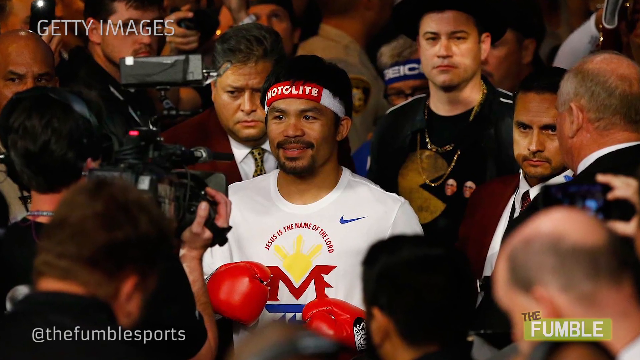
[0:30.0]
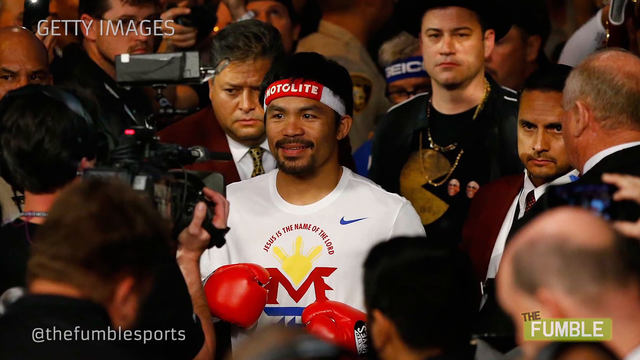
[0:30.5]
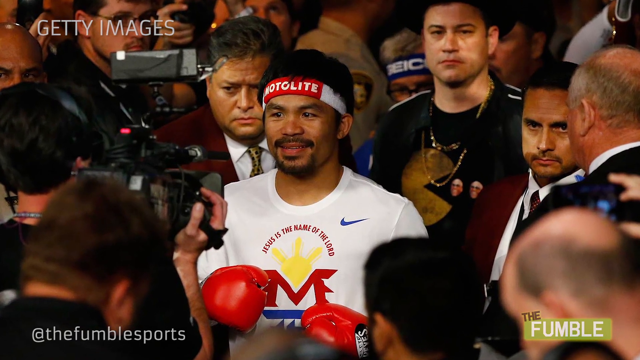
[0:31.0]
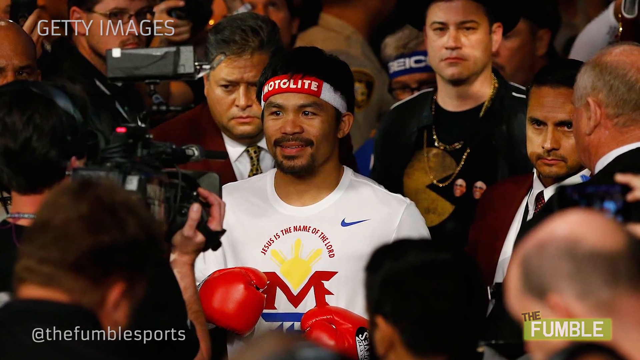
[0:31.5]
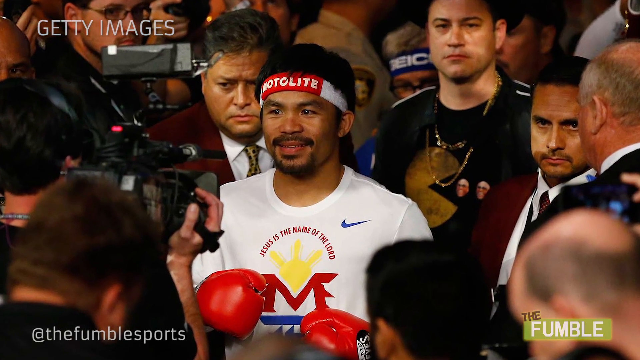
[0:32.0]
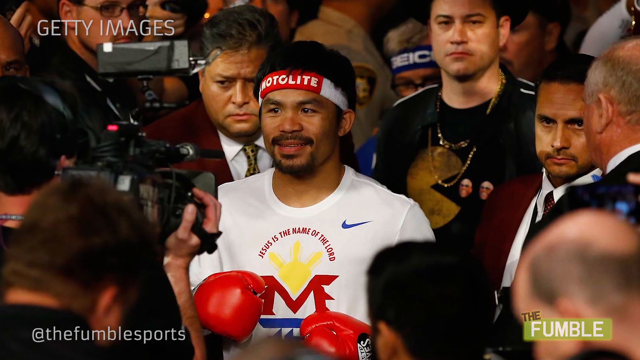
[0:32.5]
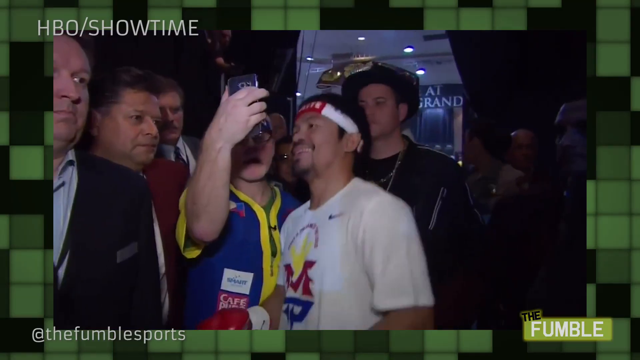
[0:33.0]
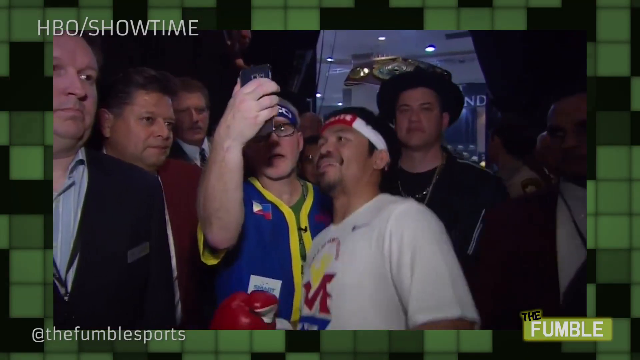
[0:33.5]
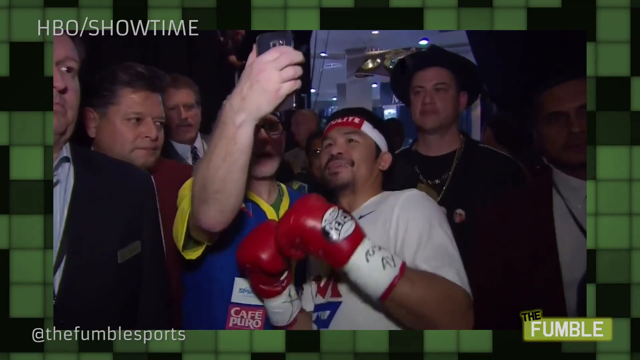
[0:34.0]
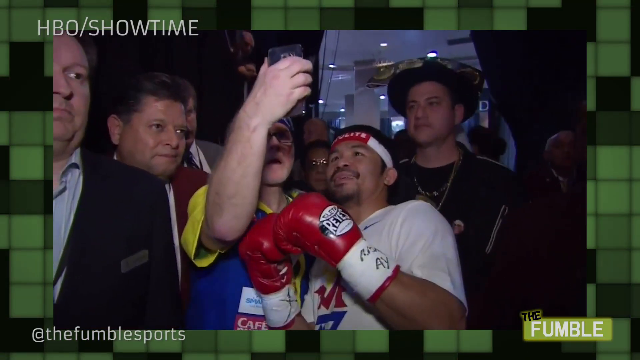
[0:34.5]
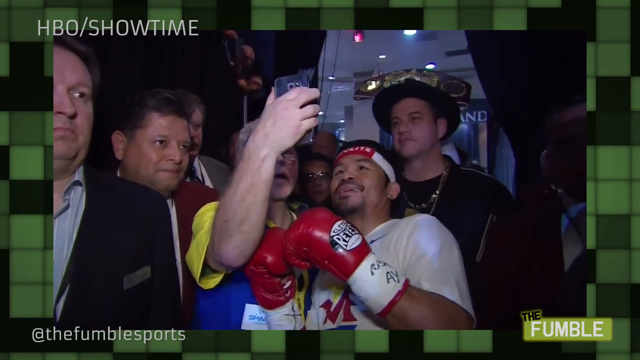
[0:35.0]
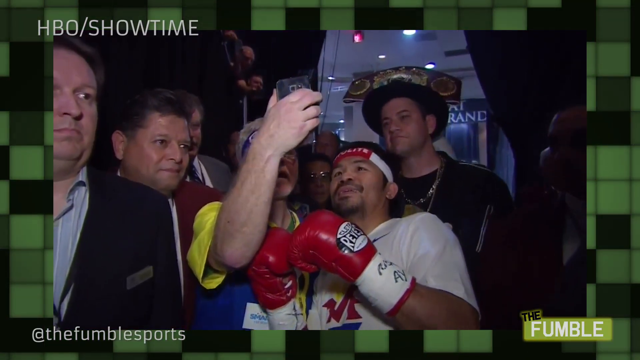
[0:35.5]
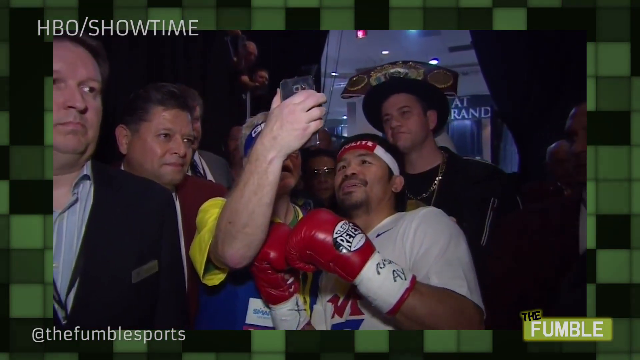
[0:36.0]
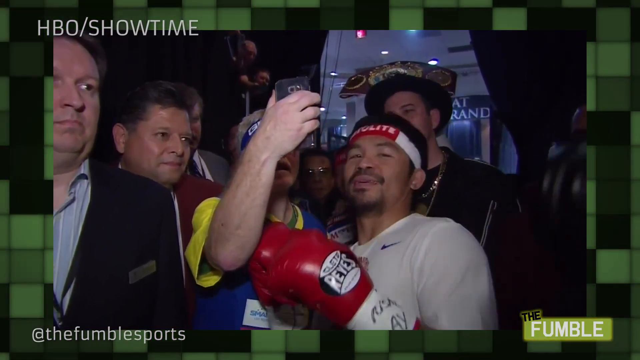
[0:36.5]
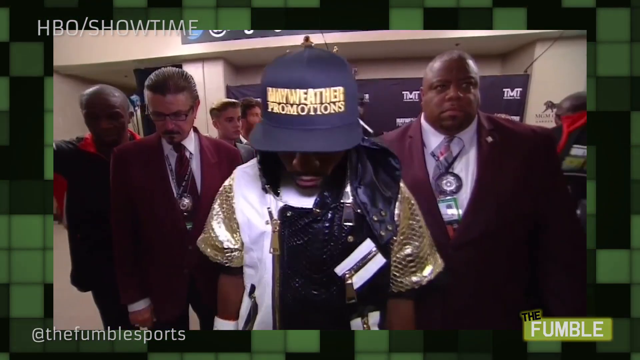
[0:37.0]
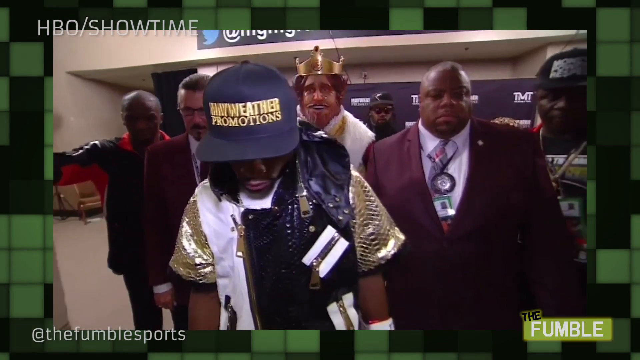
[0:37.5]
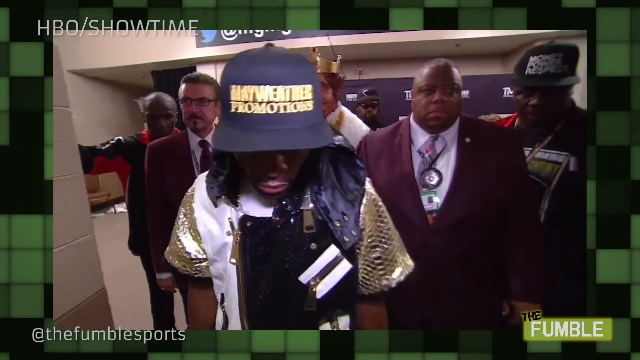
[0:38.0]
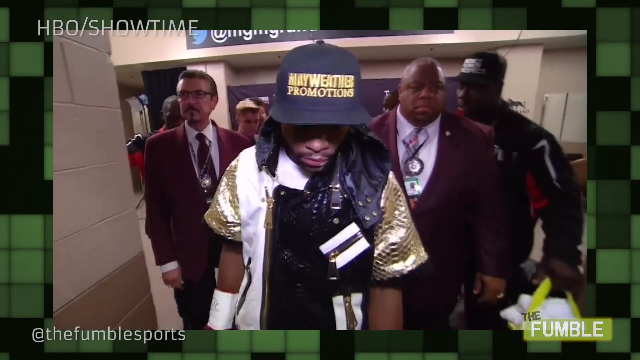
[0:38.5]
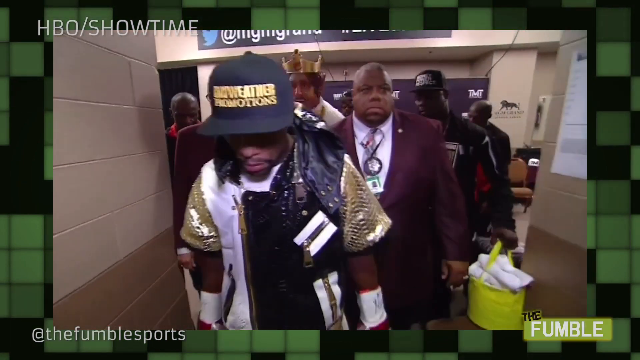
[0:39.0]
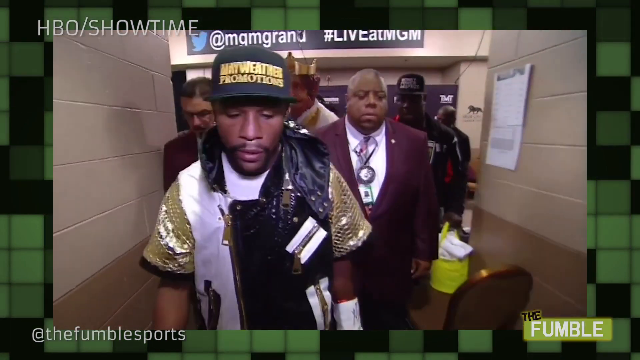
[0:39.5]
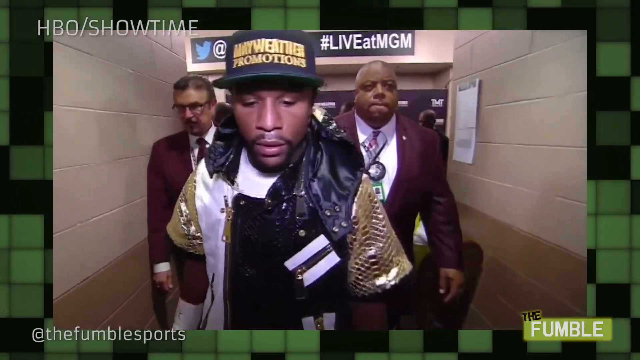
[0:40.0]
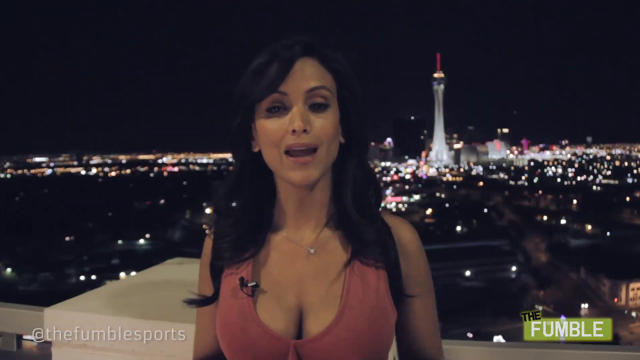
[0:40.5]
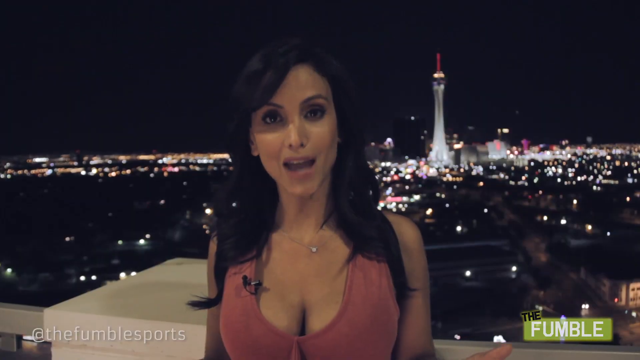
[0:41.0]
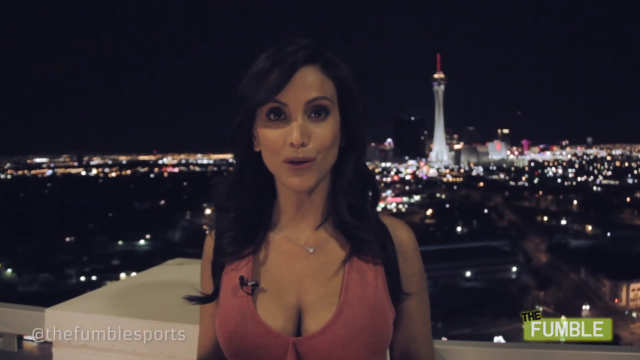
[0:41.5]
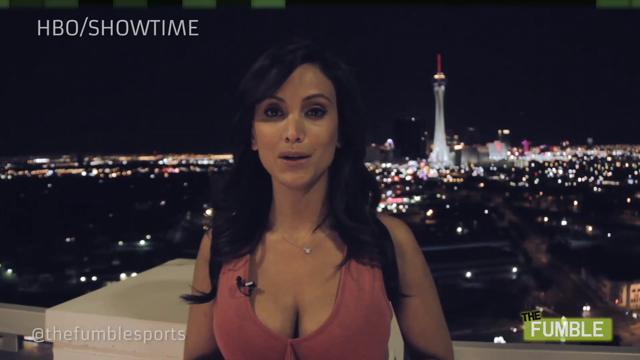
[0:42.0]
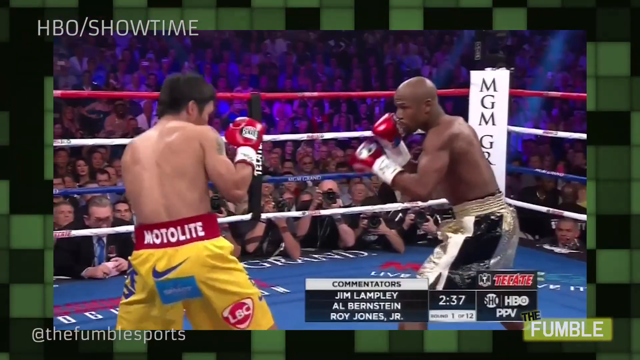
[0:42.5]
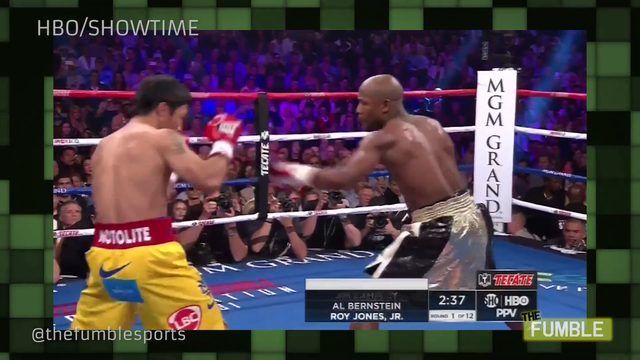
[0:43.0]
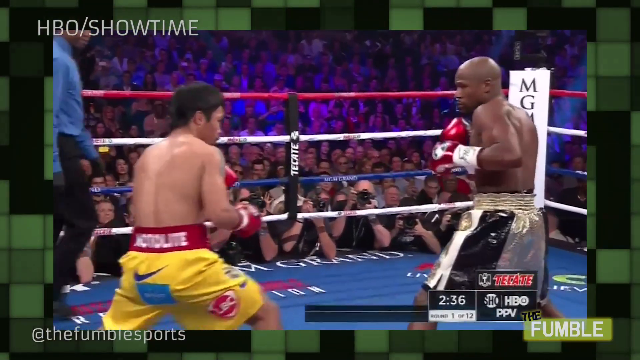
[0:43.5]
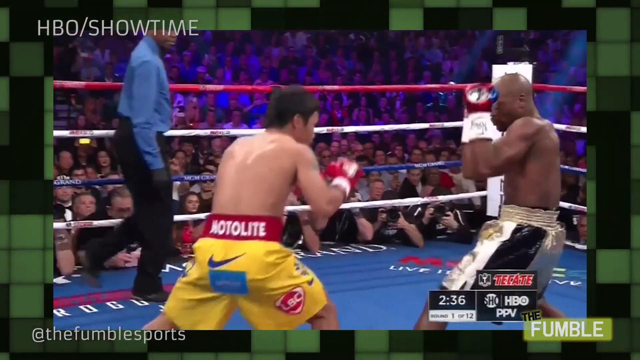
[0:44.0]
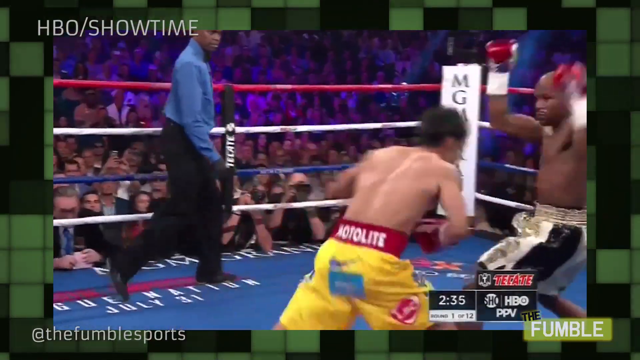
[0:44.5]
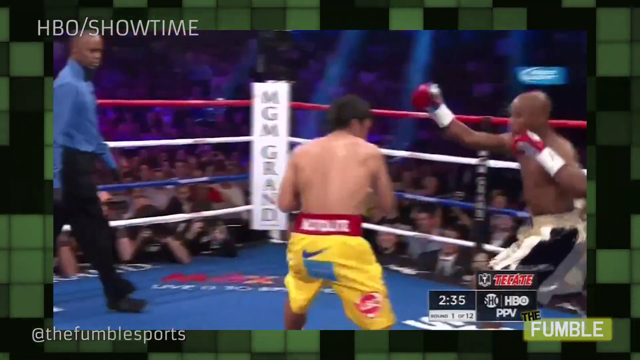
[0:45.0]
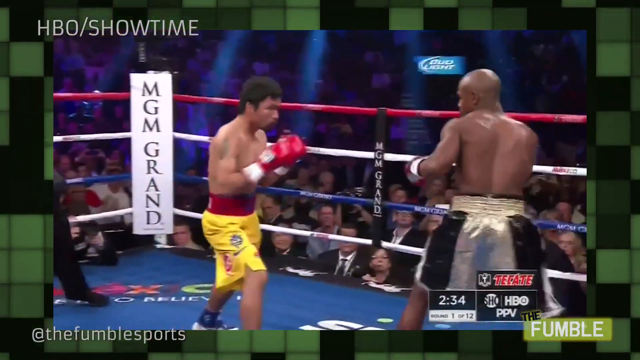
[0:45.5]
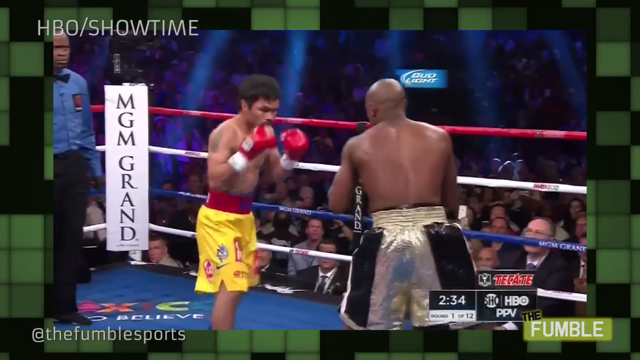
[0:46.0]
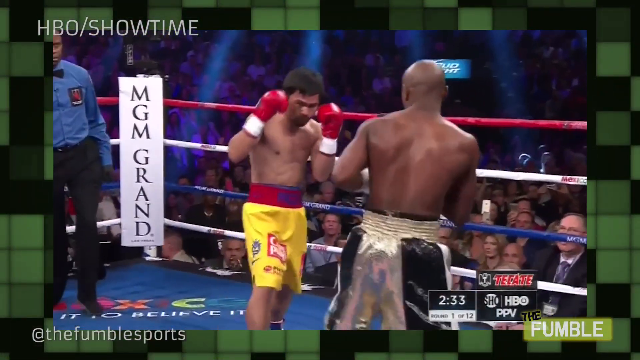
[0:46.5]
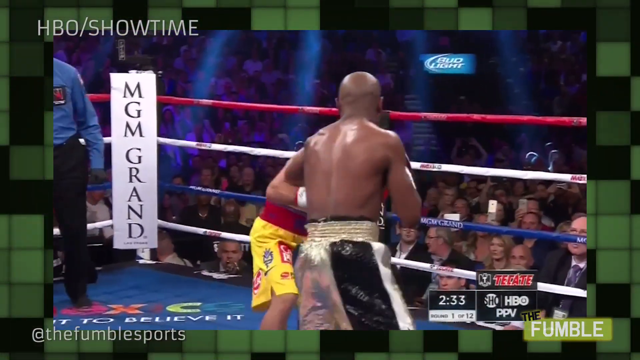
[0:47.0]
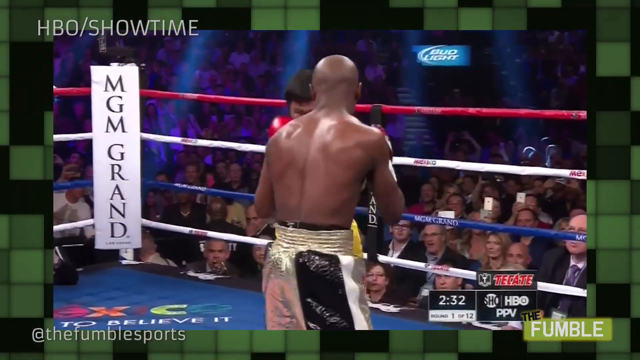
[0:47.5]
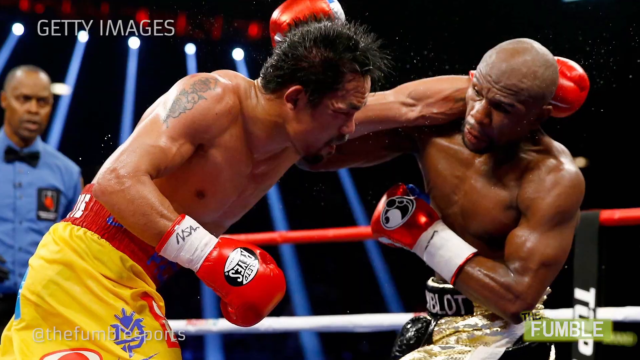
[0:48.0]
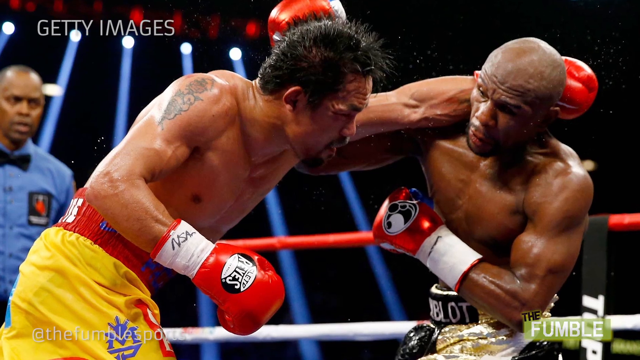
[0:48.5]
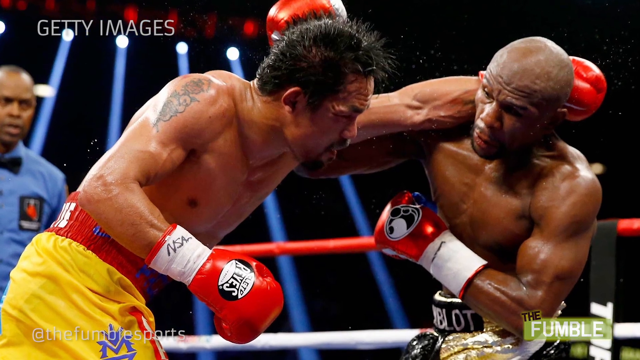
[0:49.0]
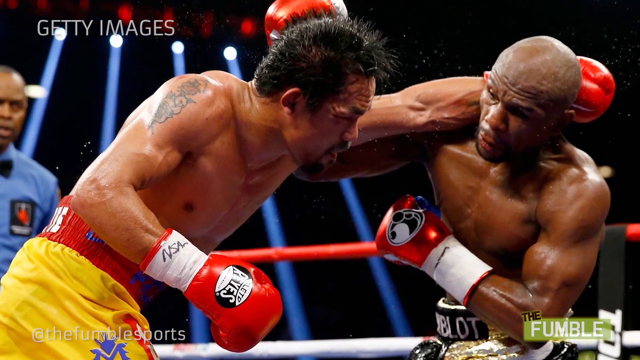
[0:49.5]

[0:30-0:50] A still photograph shows the famous boxer Pacquiao surrounded by people, with a cameraman in front of him; he wears a white Nike t-shirt and red boxing gloves. The video changes to live moving footage of Pacquiao with a fan or somebody, taking a selfie; he jumps up and down in front of the smartphone held up above him. The next scene shows another famous boxer, Mayweather, wearing a black cap with gold writing that says "Mayweather Promotions". His outfit is gold, black and white and very glamorous. A crew of people is behind him, one of them wearing a costume that looks like the Burger King King. The video then cuts to a news presenter, a woman with long dark hair and tanned skin, talking toward the camera with a night cityscape behind her. Next is footage of a live boxing match in the ring between Pacquiao and Mayweather, followed by a still action photograph of the match in which Pacquiao is punching Mayweather.